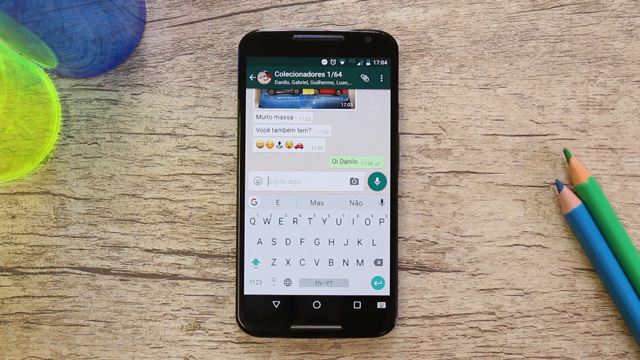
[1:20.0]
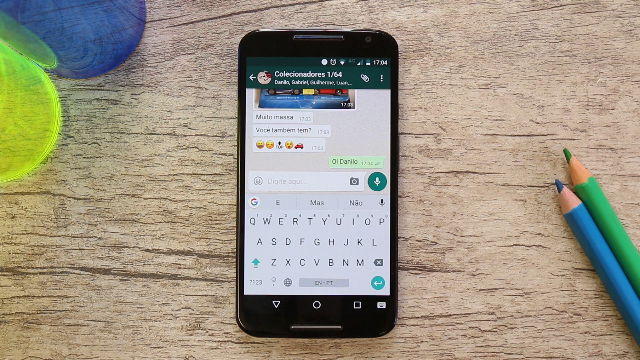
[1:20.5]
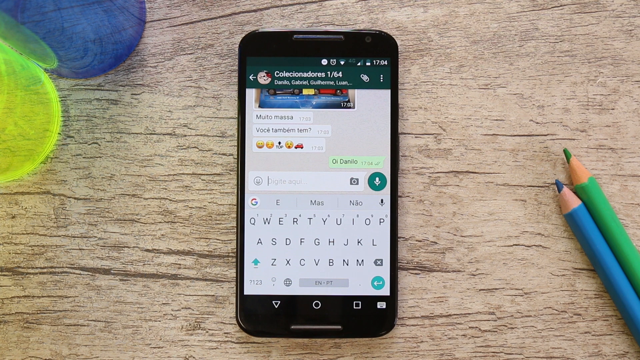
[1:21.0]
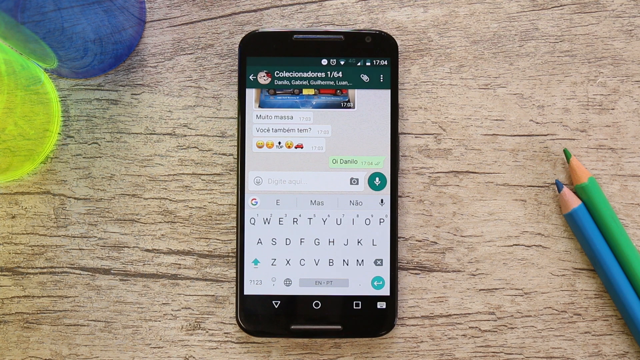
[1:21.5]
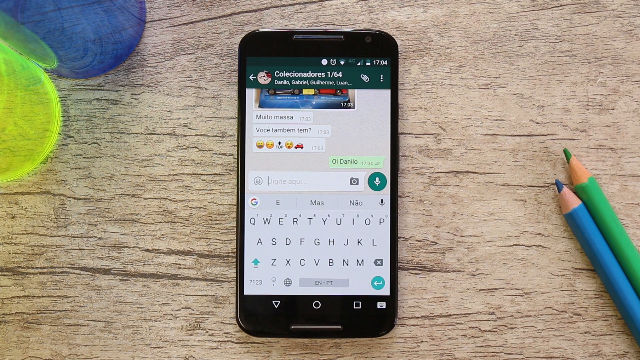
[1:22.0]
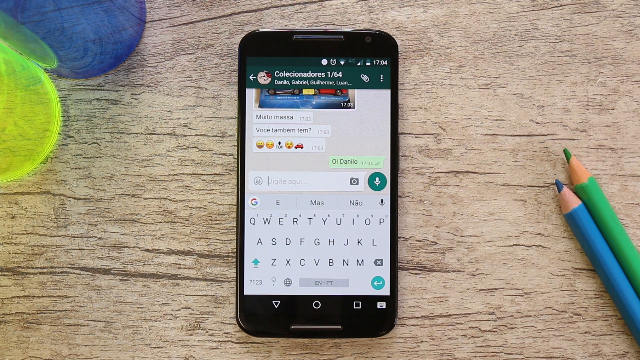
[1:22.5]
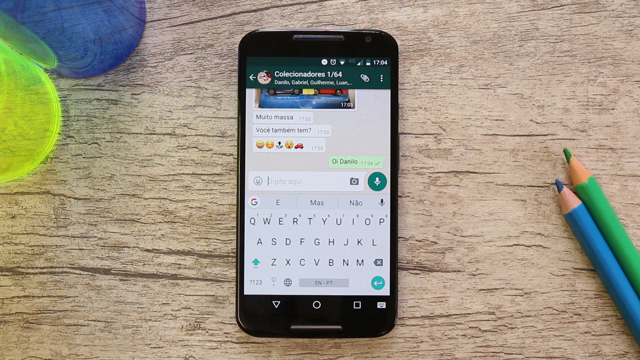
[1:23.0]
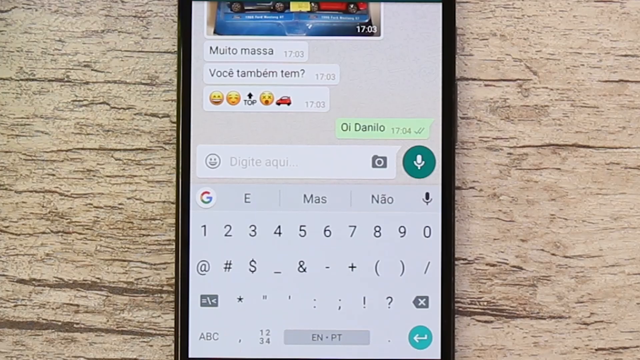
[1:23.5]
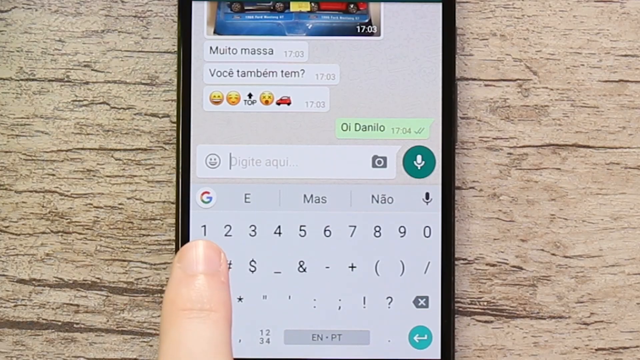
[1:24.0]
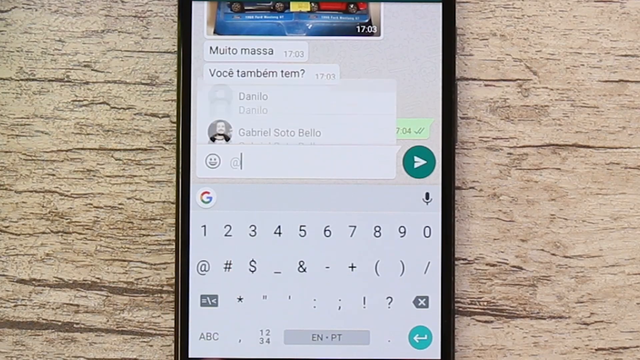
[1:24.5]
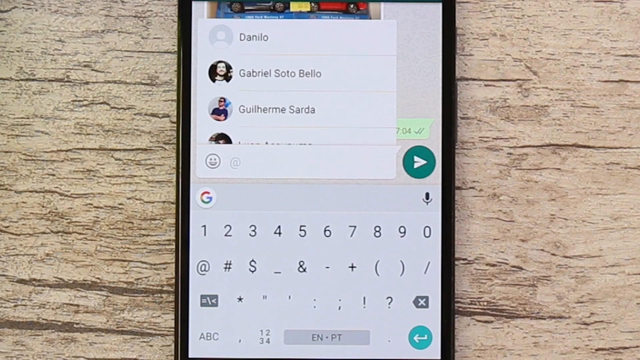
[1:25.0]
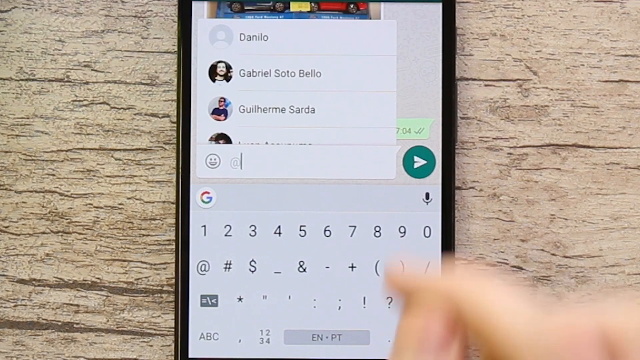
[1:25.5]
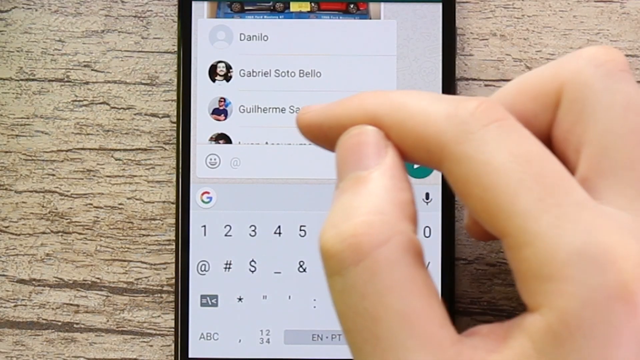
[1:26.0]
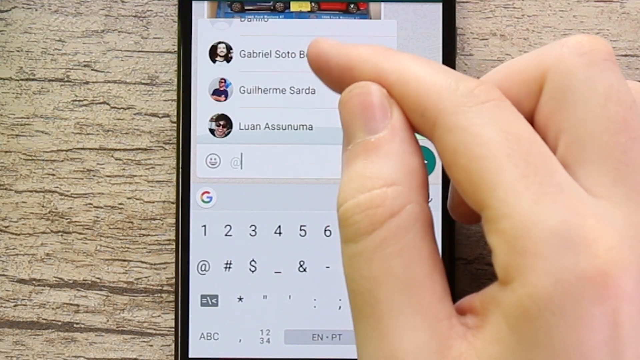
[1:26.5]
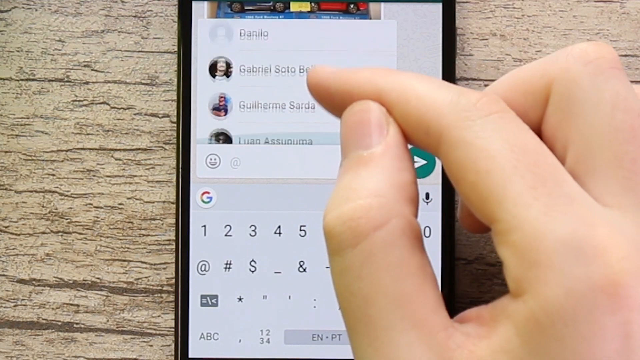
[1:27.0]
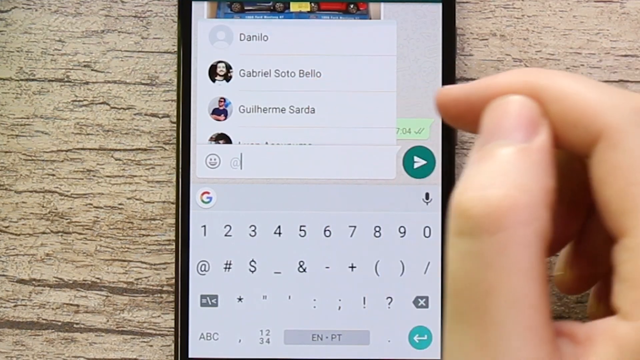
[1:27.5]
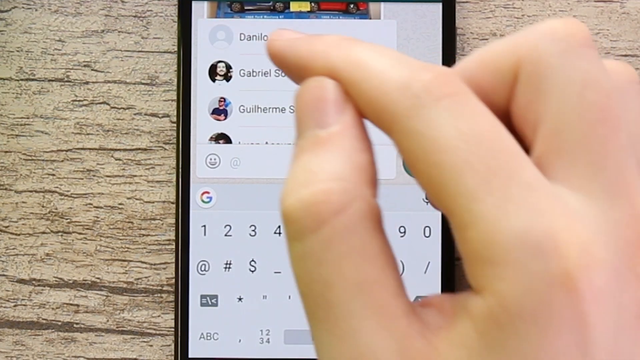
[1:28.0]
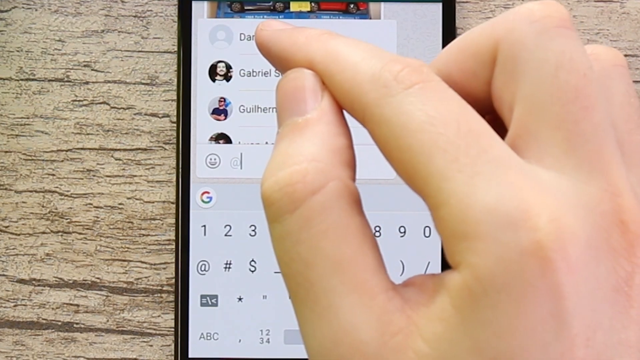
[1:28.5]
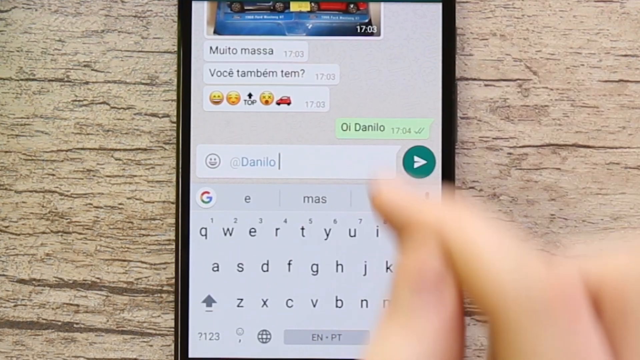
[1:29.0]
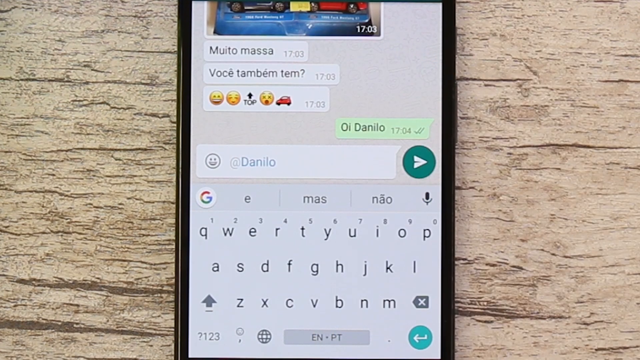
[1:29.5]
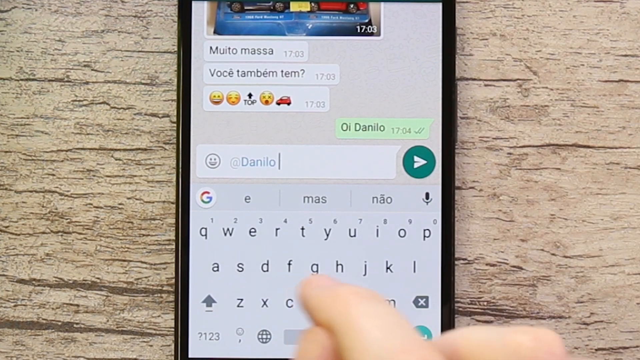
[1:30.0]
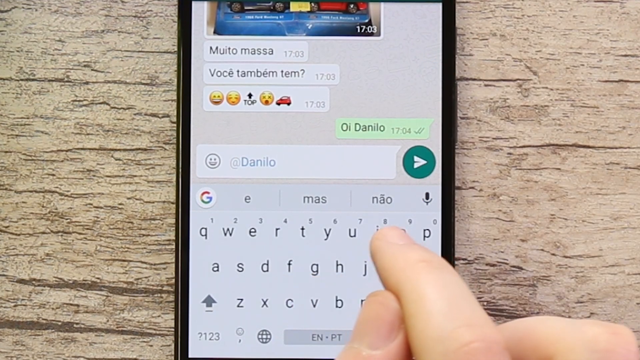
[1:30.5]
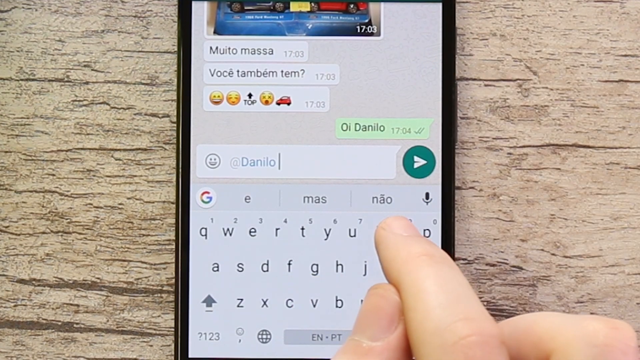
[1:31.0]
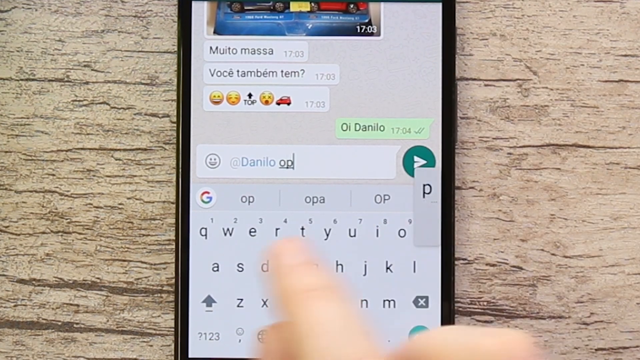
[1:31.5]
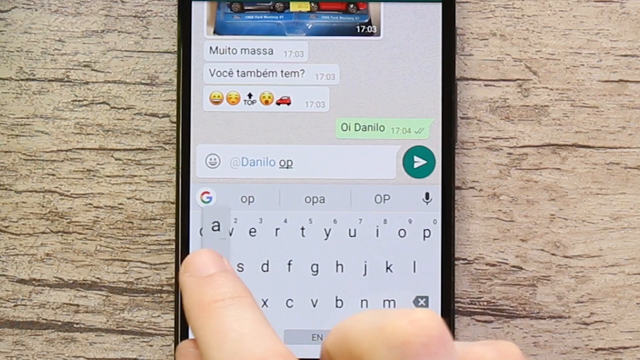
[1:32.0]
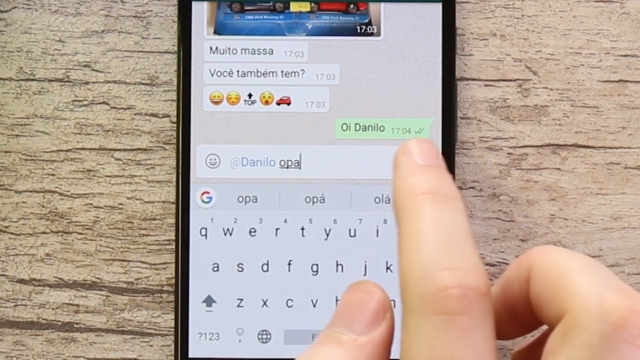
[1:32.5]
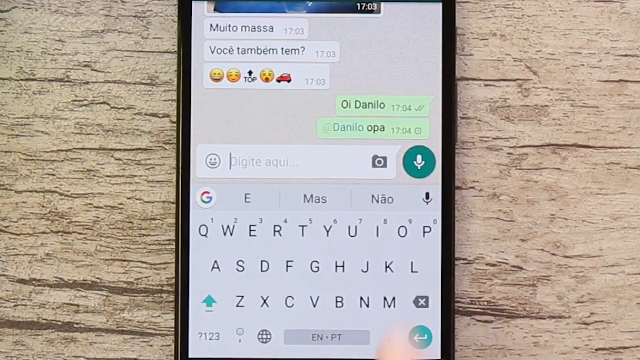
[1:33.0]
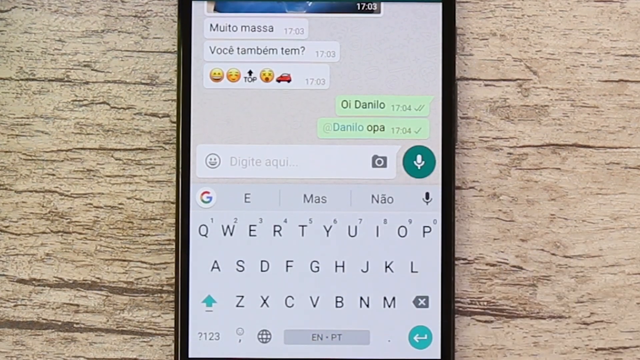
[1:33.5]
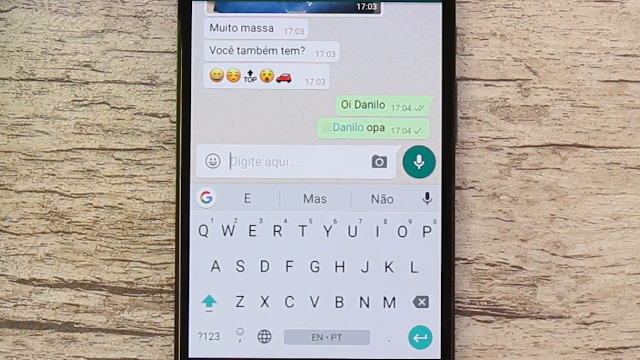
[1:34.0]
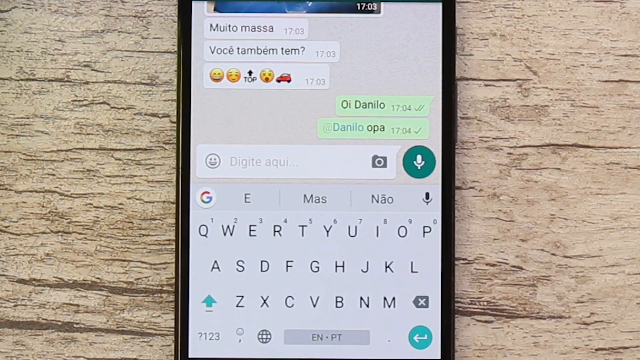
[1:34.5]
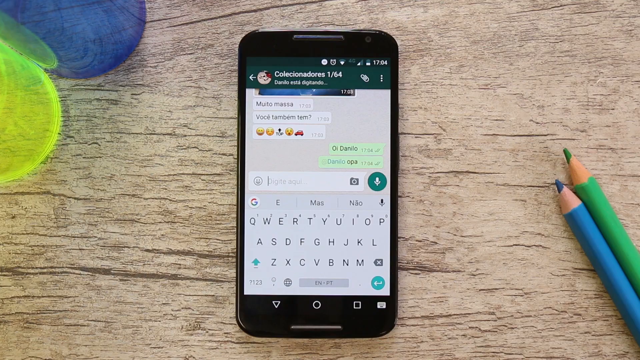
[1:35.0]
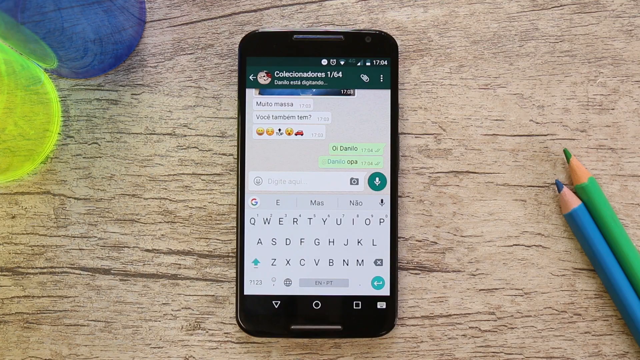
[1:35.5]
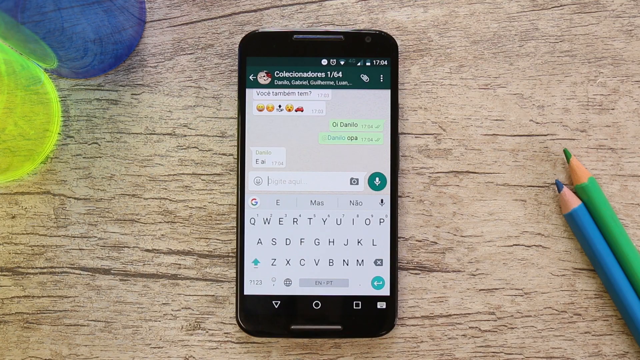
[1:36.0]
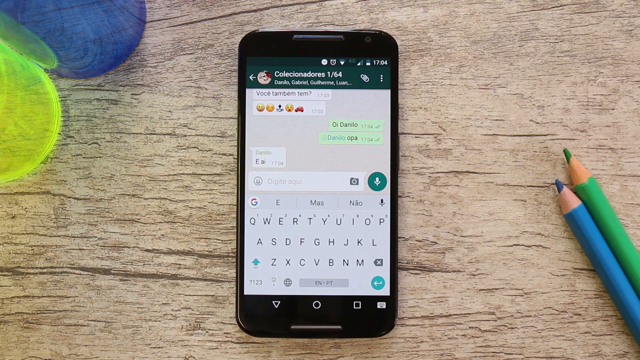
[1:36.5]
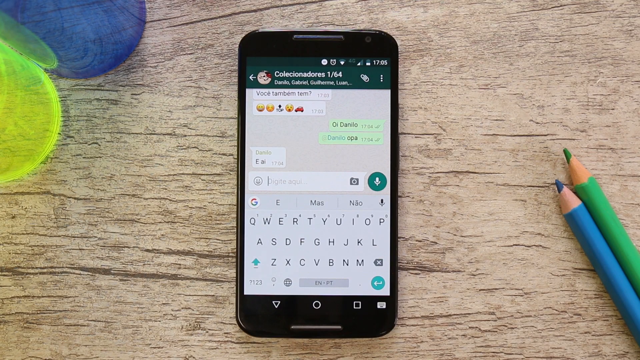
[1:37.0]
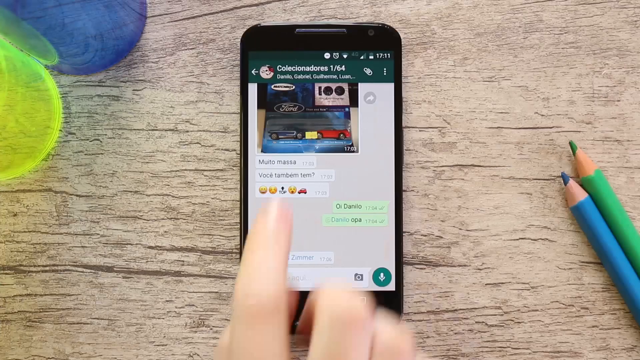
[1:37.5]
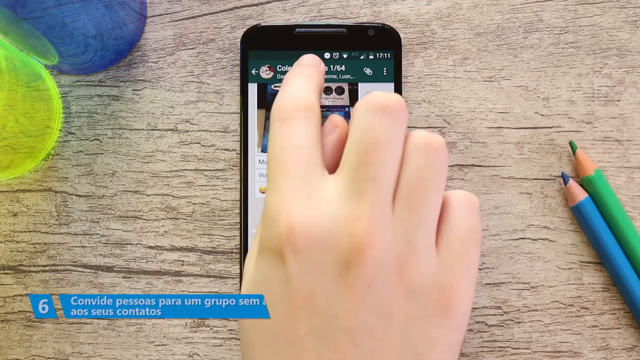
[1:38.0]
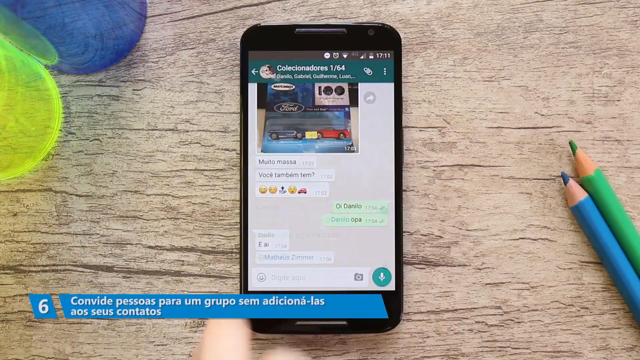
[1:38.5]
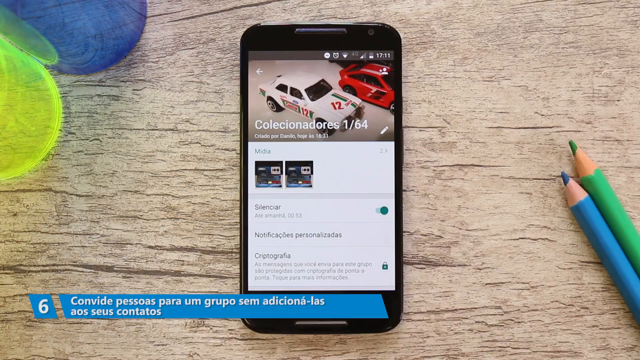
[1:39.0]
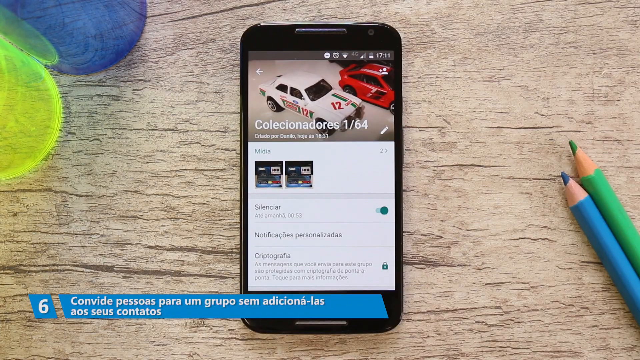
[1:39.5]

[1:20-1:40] The person writes a message to Danilo, "@Danilo", and writes "OPA". They tap the top of the screen where there is a white car, type the @ symbol, and their friend Danilo from their contacts shows up; they scroll for Danilo and write "OPA" to him. At the top of the app they tap the "1/64" area, and a white object that looks like a matchbox car appears, with a number on it. The text the person writes shows up with a light green box behind it. The number six is written at the bottom of the screen inside a blue box with white text.